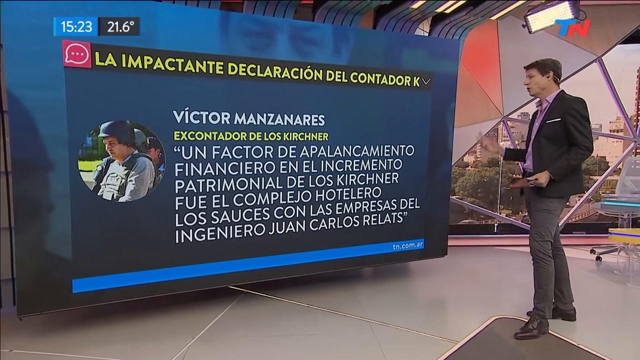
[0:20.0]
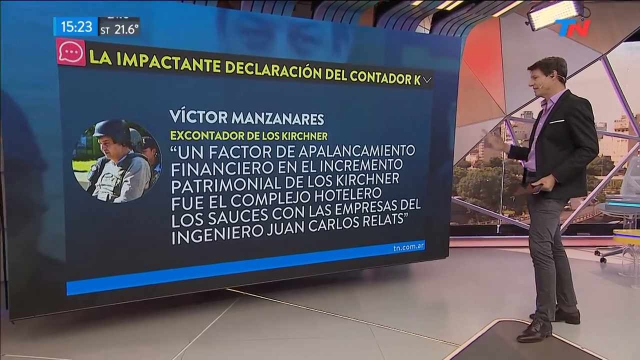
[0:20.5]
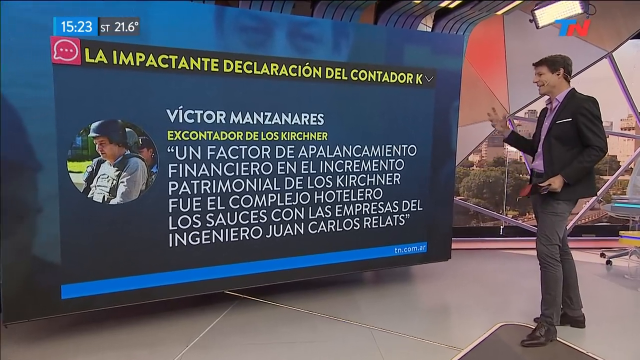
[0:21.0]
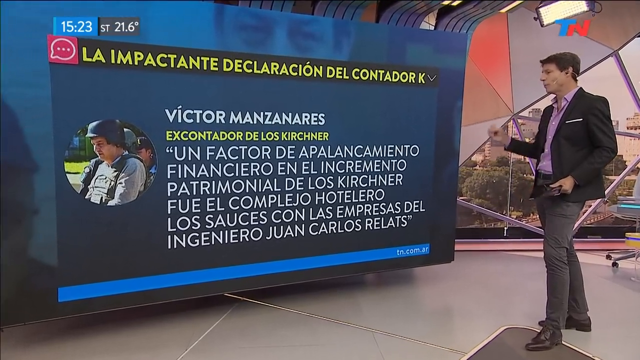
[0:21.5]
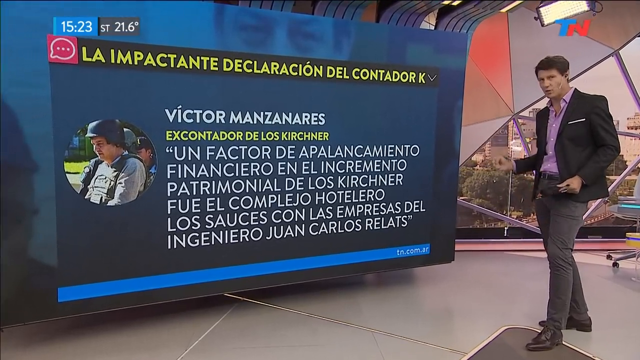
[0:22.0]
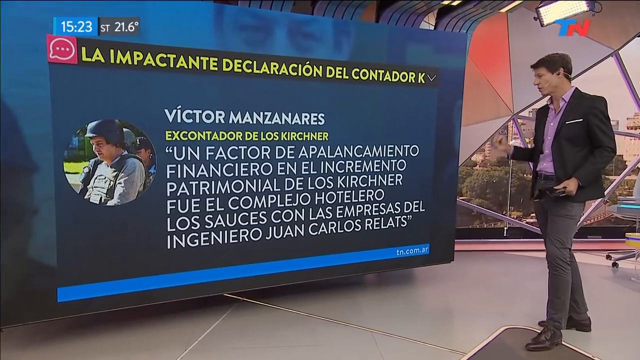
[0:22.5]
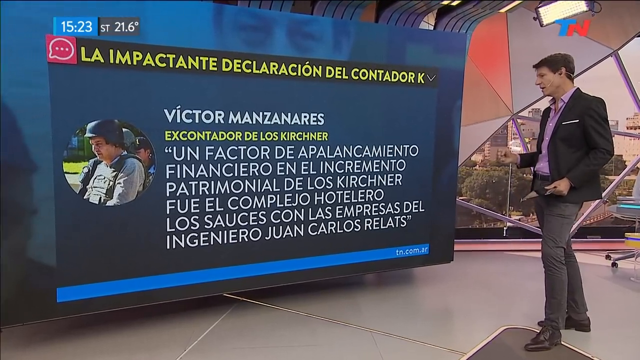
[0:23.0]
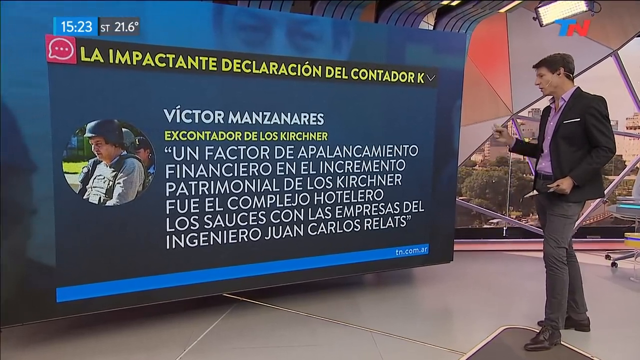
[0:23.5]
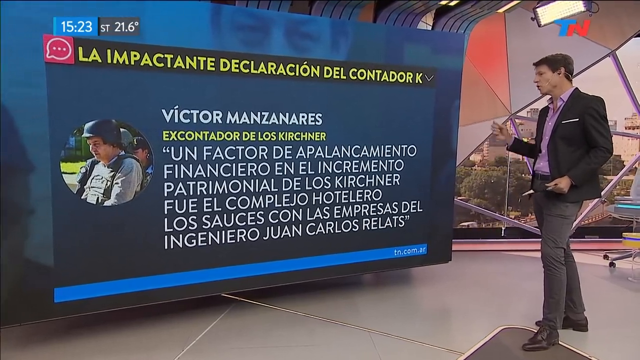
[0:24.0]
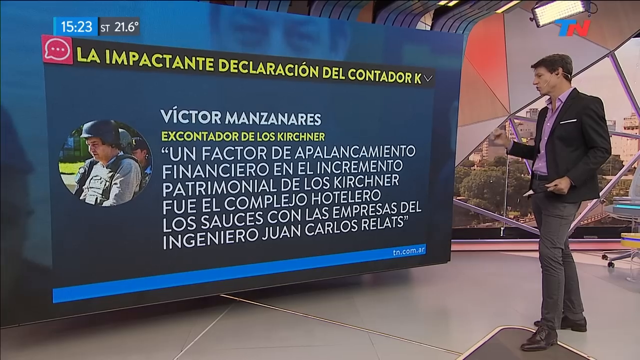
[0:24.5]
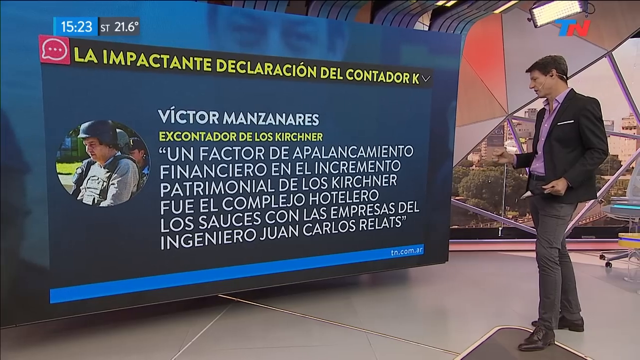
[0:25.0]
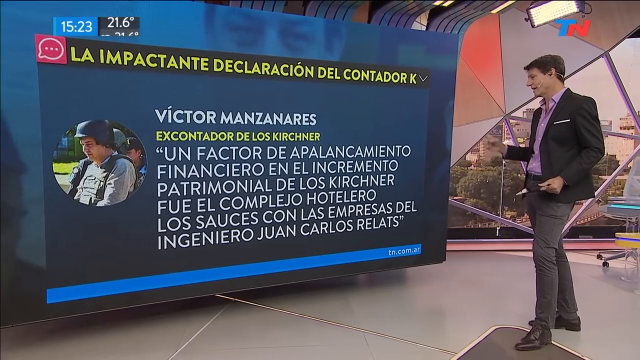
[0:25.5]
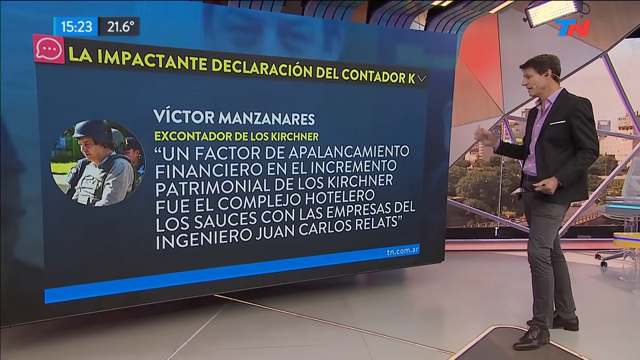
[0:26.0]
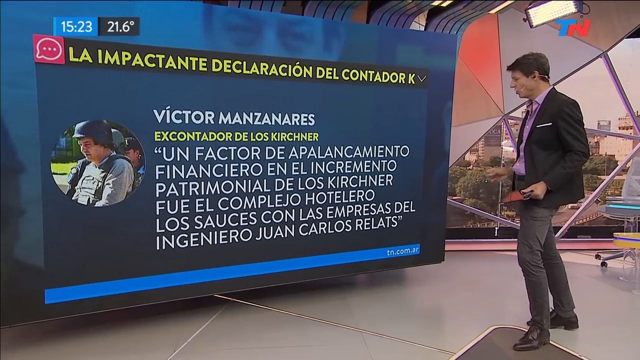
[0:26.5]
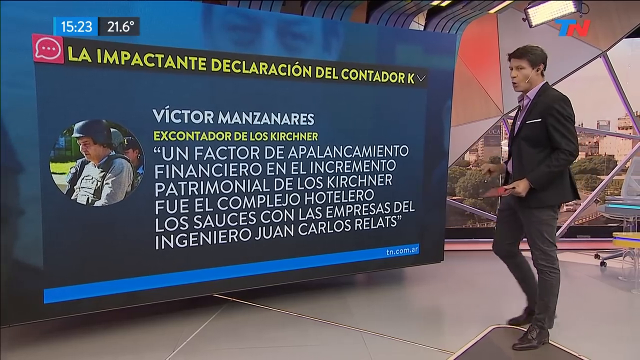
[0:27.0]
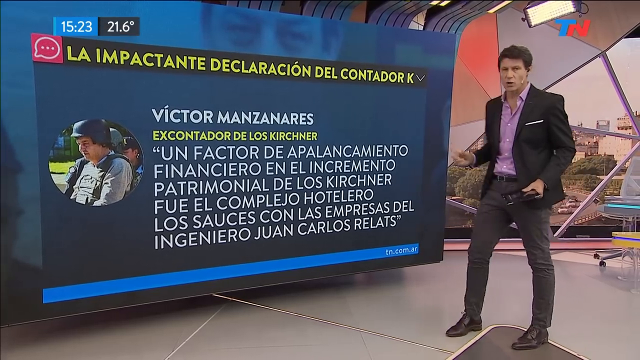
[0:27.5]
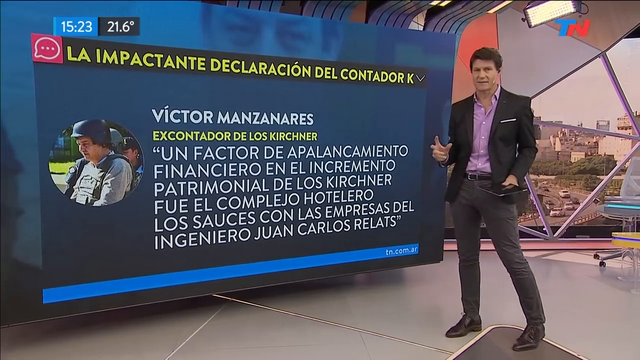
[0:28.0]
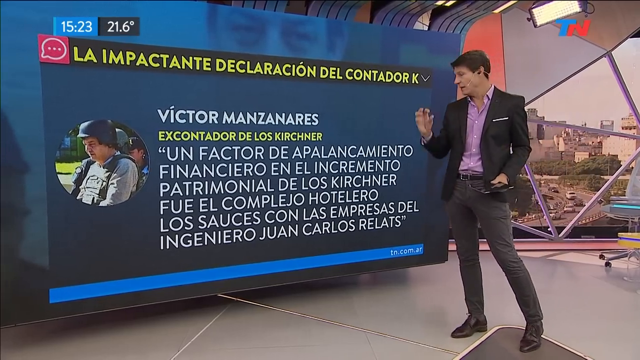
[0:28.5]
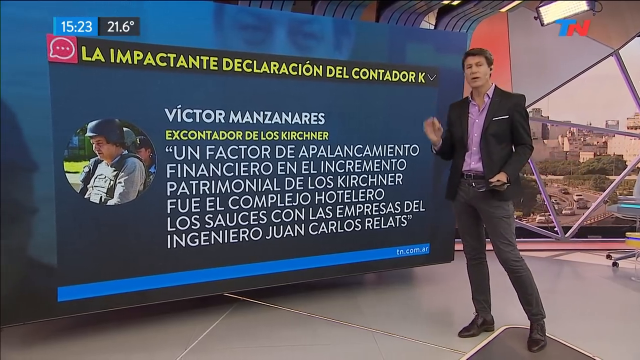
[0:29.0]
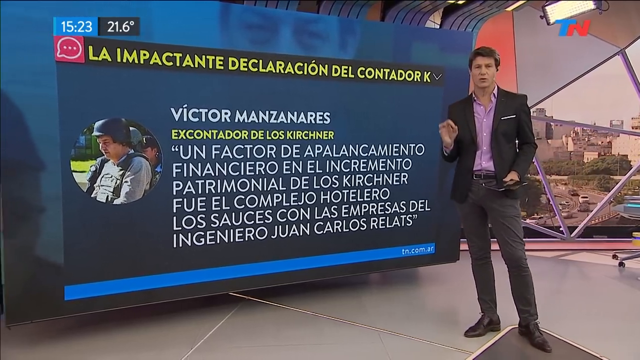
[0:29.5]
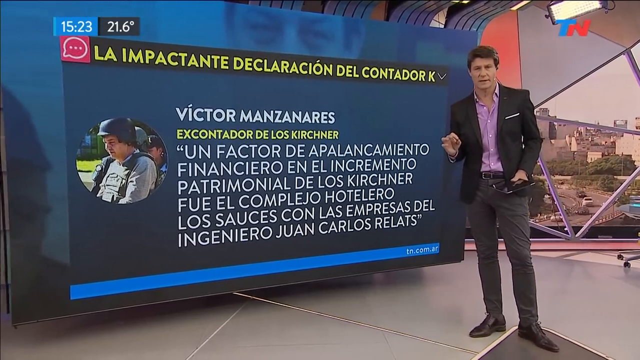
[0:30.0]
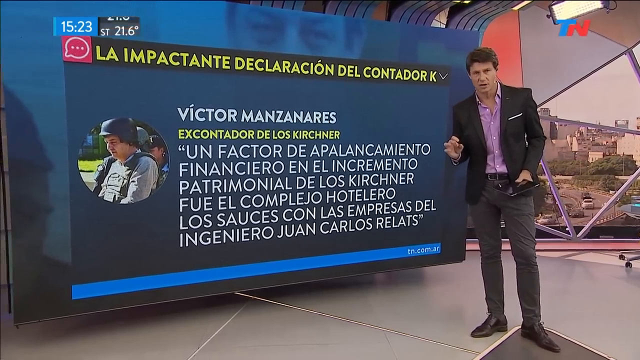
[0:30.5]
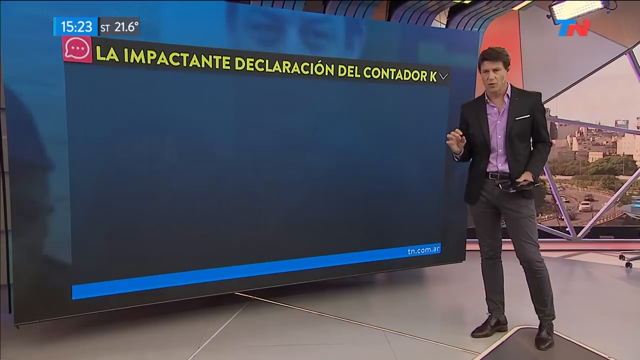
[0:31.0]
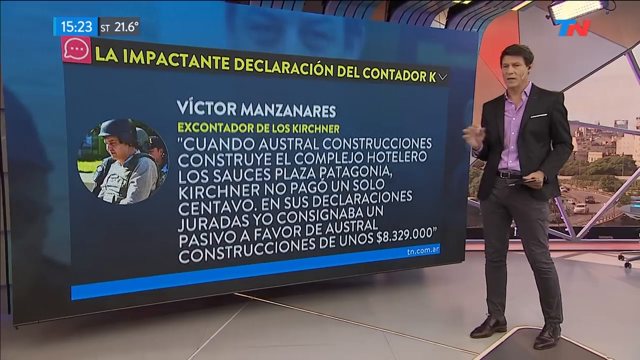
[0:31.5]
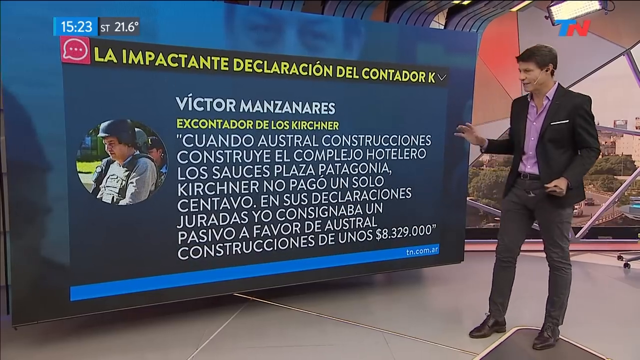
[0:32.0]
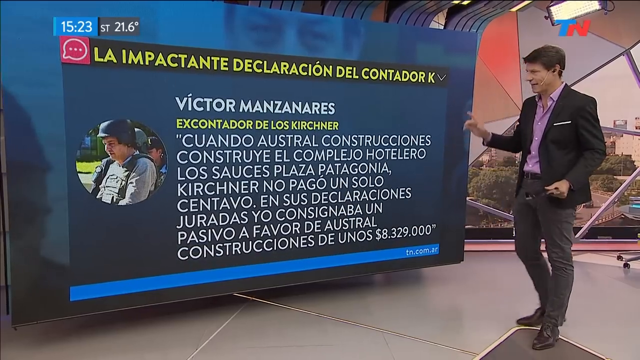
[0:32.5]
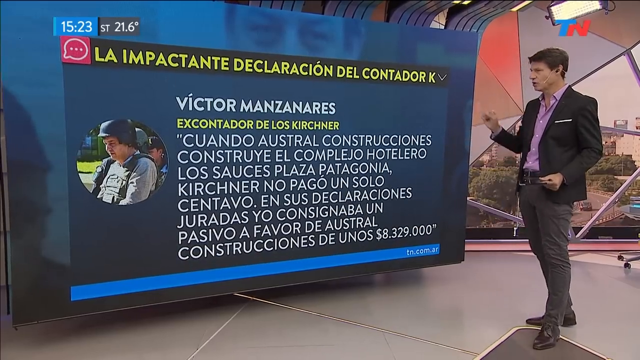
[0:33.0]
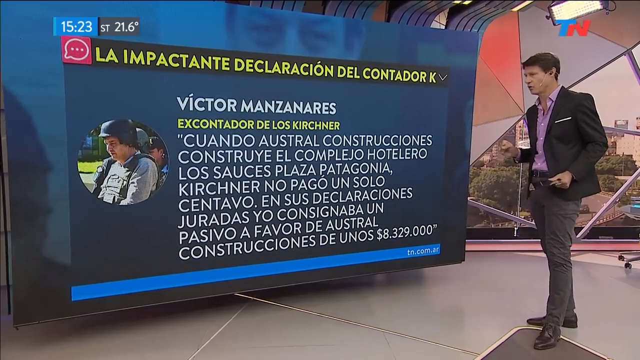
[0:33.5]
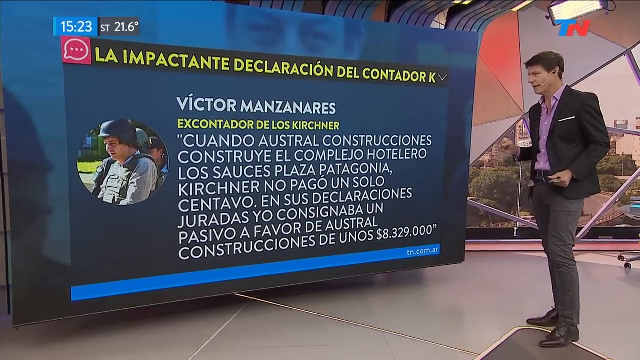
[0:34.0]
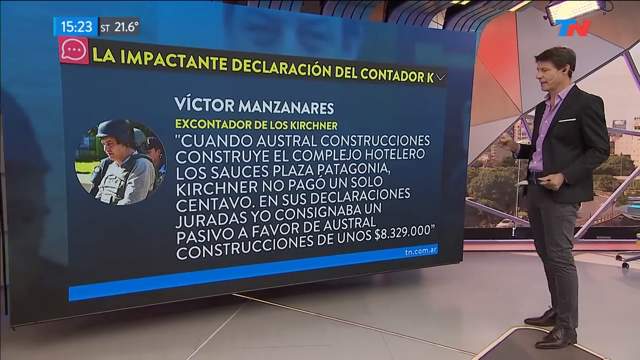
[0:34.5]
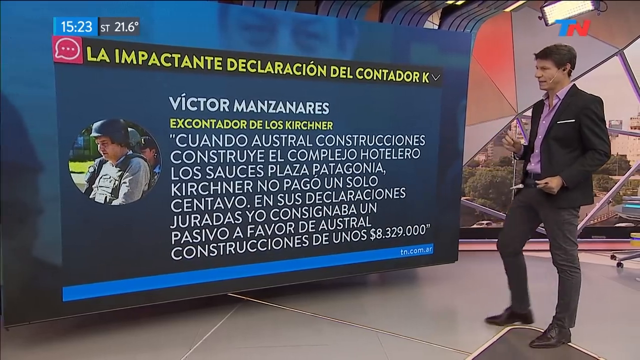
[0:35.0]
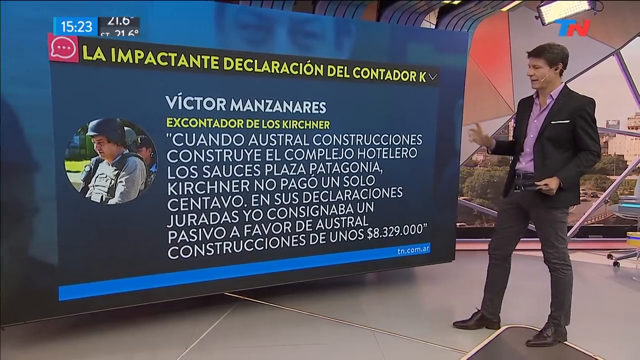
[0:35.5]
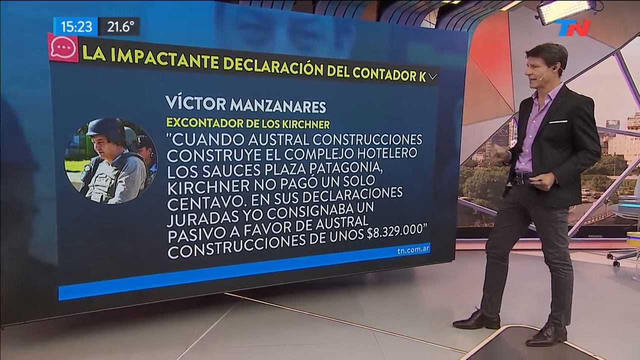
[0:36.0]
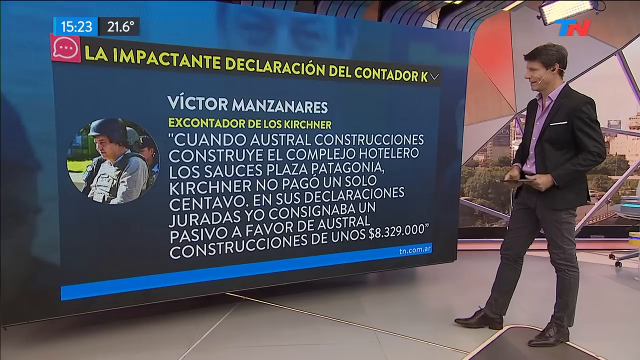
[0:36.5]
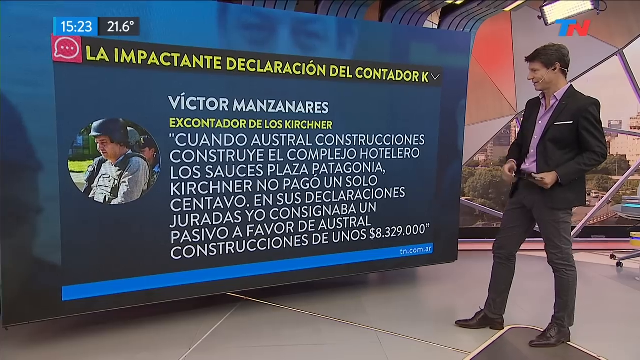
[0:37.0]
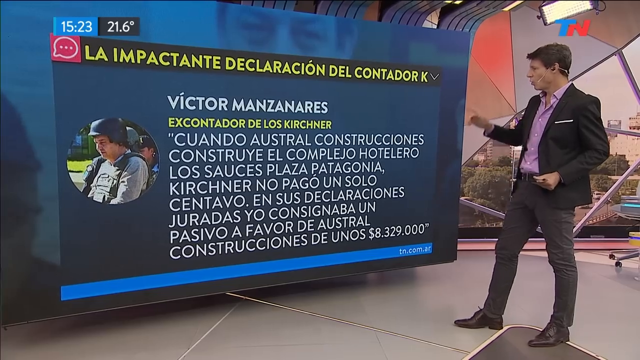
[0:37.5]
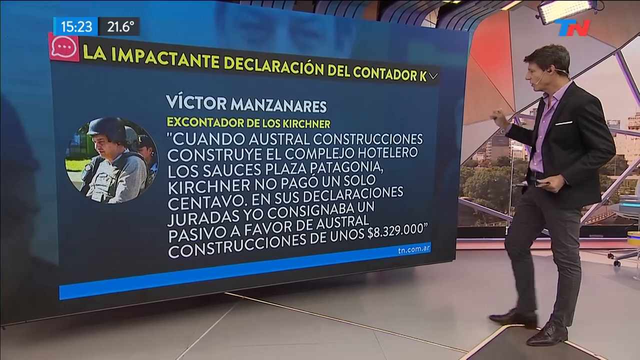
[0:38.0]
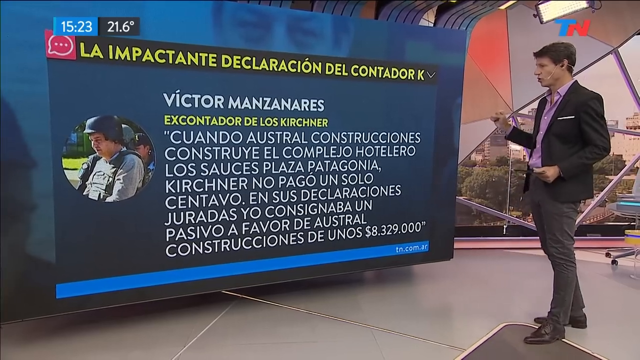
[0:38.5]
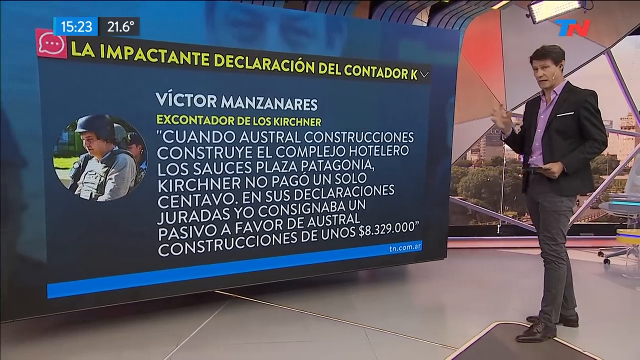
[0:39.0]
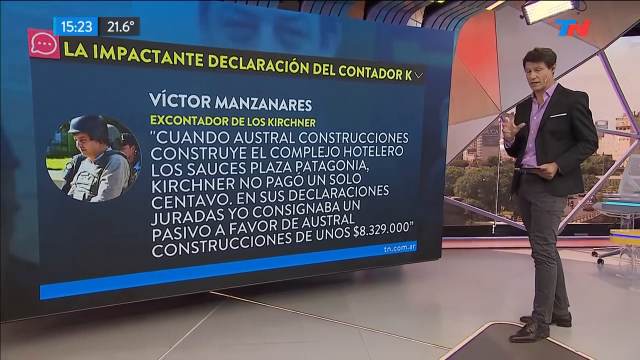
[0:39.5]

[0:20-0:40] The man in the studio looks at the television screen with text, his right arm moving up and down repeatedly as he speaks, and he appears to have an iPad or tablet in his left hand by his waist. He looks at the camera and then back at the television monitor, pointing at it and moving his right arm and hand somewhat side to side, then looks at the camera for a moment. In the upper right corner is a logo with the letters TN in blue and red. In the upper left corner are two small rectangles with white text reading "1523", apparently the time, and "21.6 degrees", apparently the temperature. Behind him is a window that is not square or rectangular but almost triangular in shape.